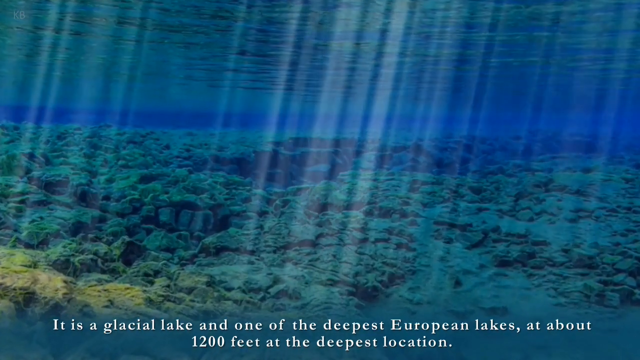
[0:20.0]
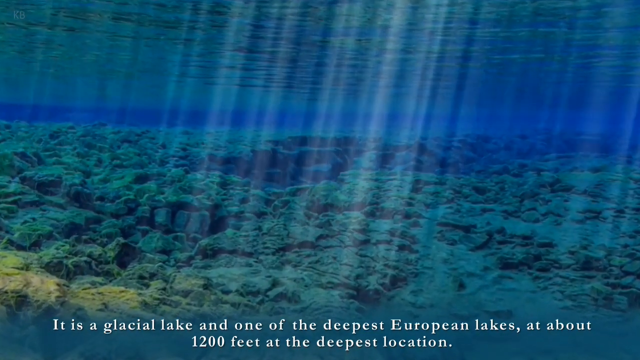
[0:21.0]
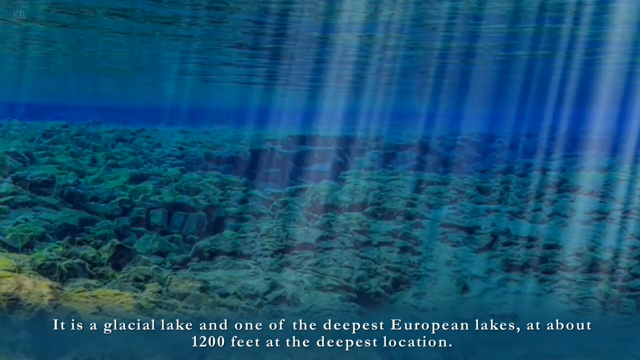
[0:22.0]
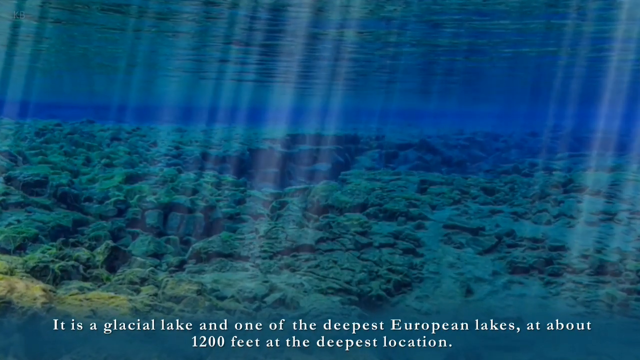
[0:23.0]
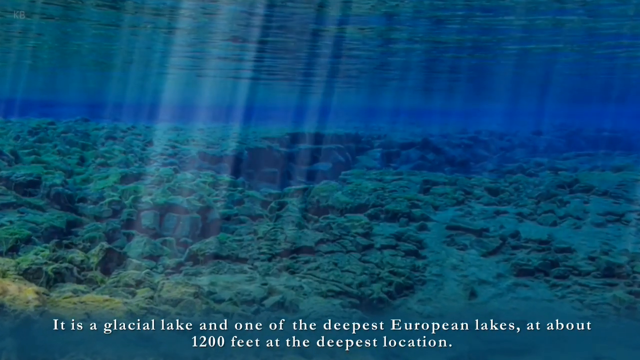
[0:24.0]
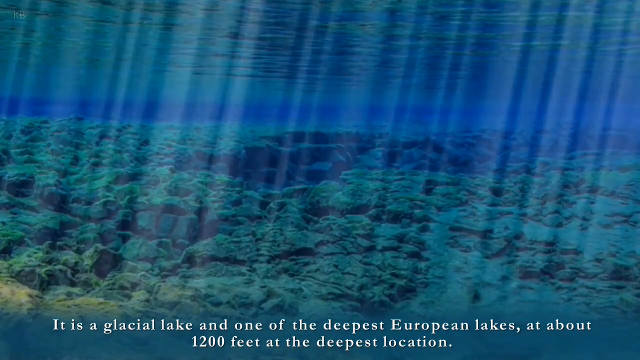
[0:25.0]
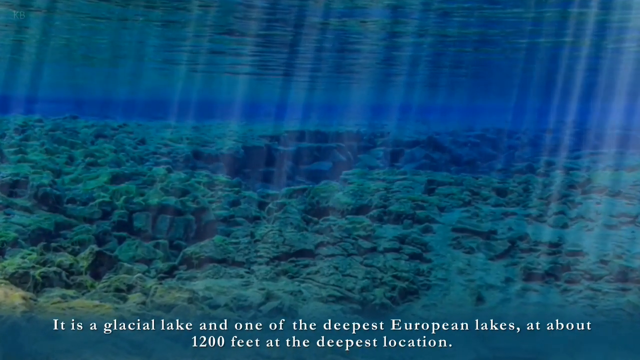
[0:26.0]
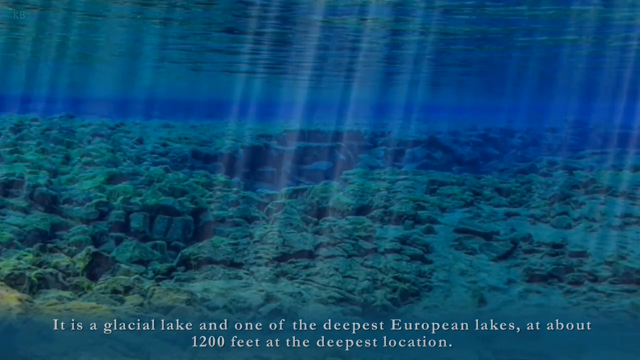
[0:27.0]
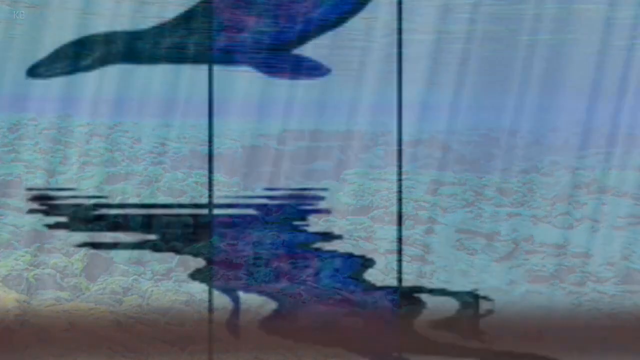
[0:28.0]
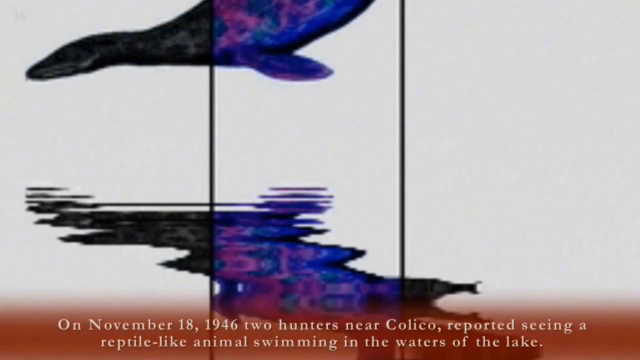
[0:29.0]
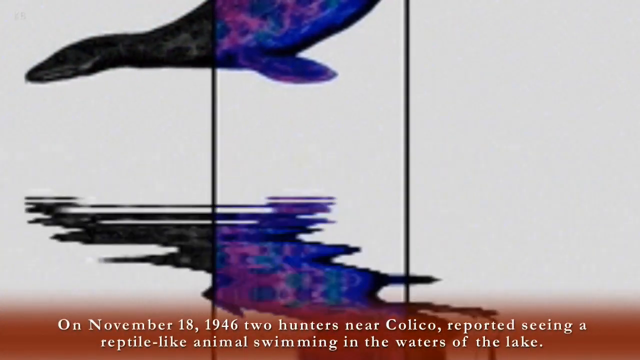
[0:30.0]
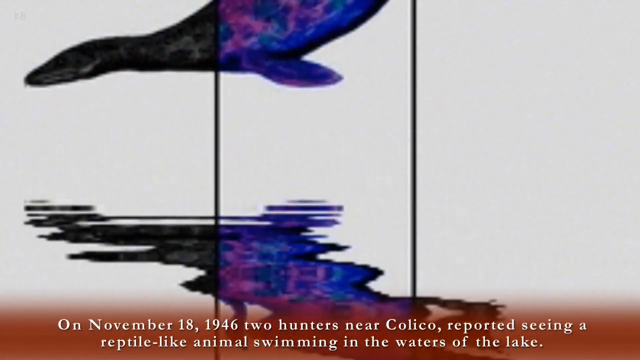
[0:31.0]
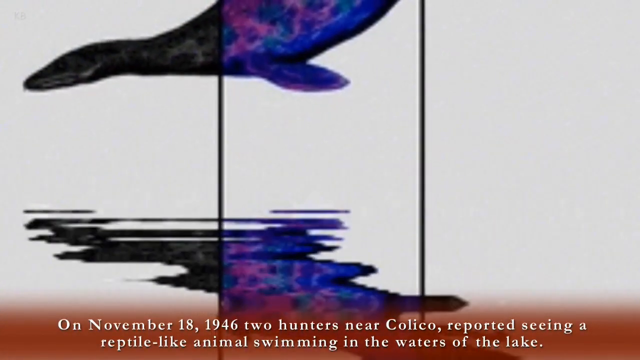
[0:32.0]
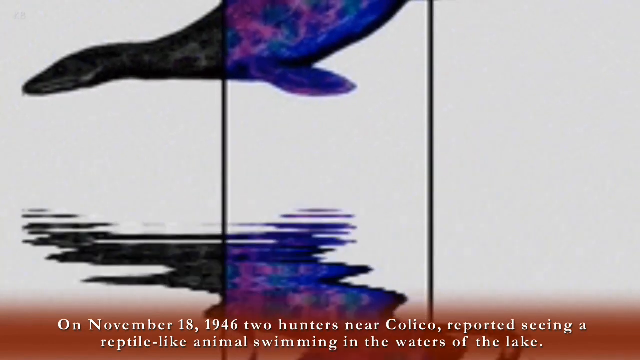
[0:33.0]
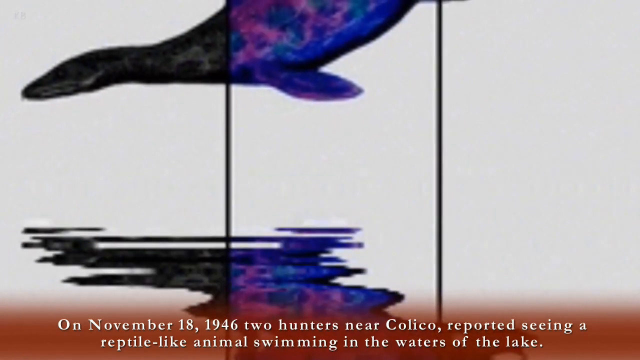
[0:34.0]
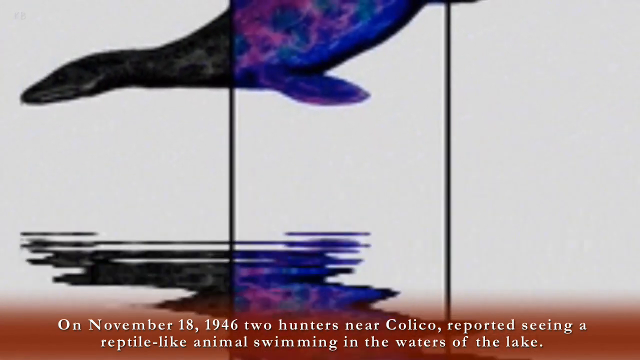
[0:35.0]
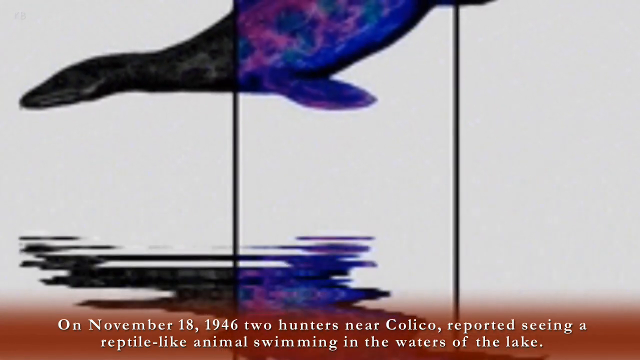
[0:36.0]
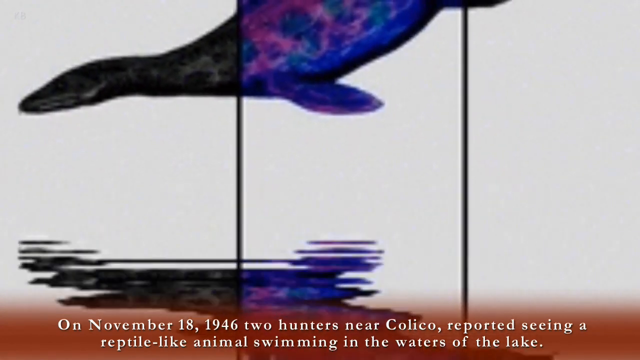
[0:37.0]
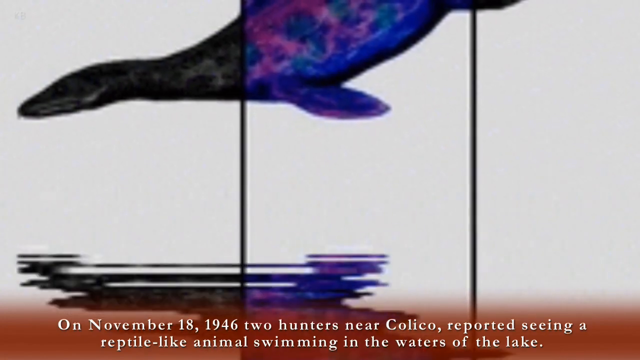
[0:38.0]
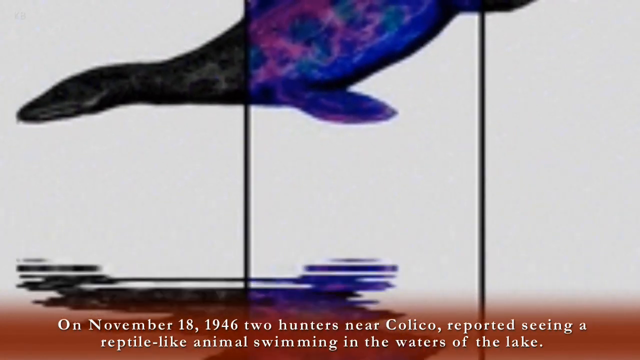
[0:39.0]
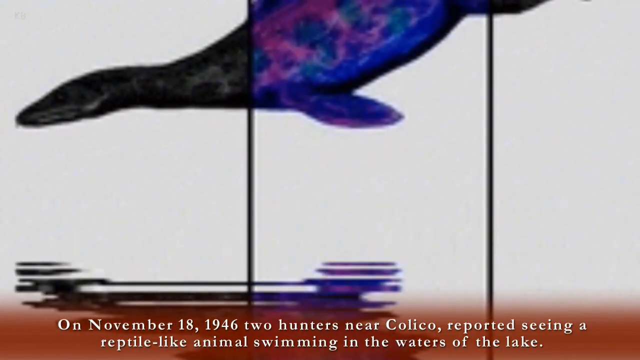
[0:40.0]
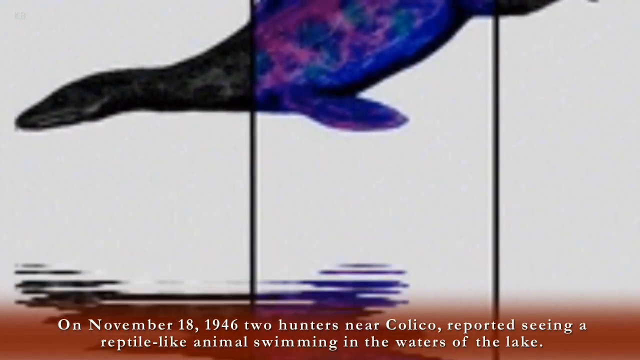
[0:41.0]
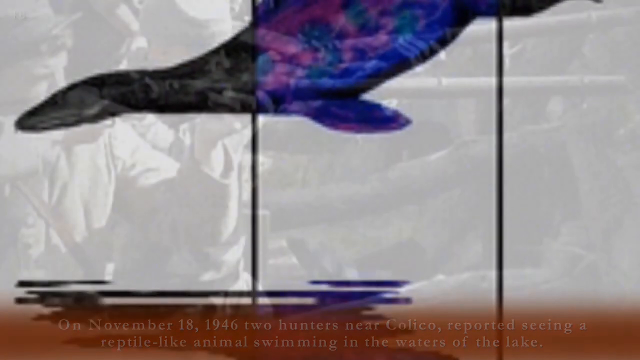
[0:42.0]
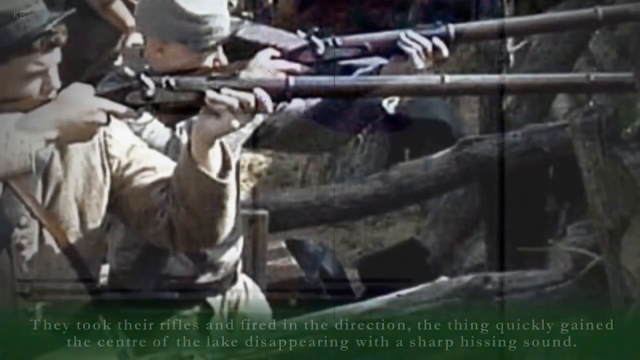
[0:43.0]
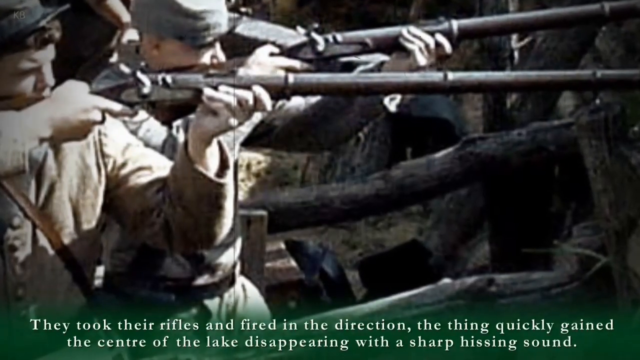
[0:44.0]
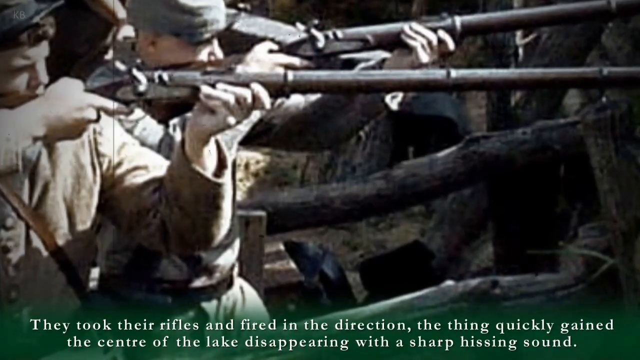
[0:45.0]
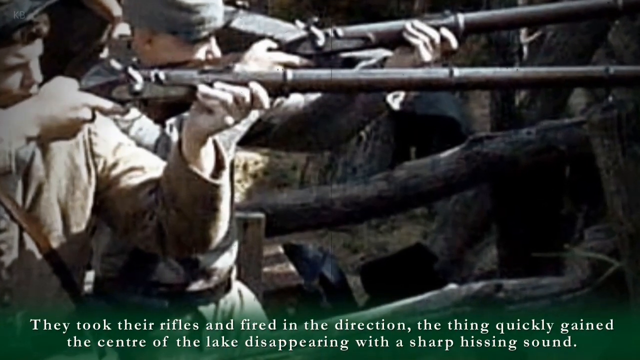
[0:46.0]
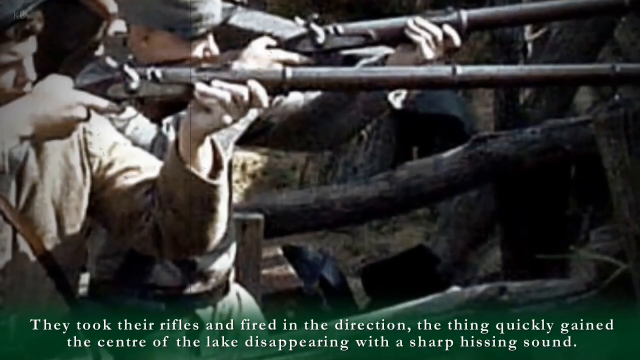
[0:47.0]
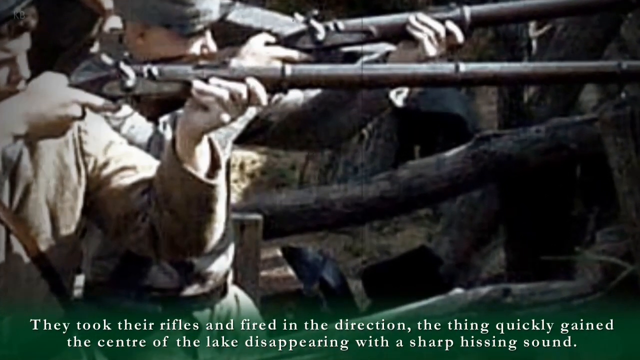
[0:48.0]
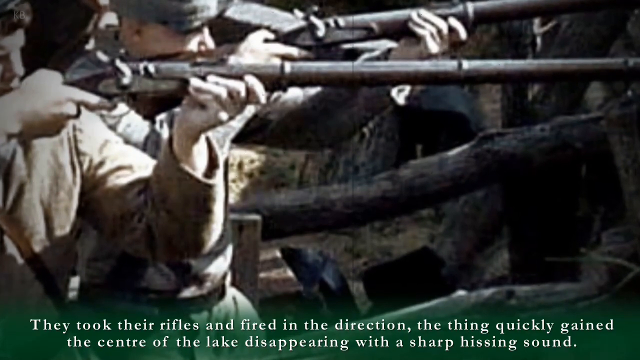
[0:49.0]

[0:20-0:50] The deepest lake in Europe is shown as on-screen text continues: "On November 18, 1946, two hunters near Koleko reported seeing a reptile-like animal swimming in the waters of the lake." The text goes on to say they took action in its direction and the animal disappeared into the lake. The lake is again described as a glacious lake and one of the deepest European lakes.